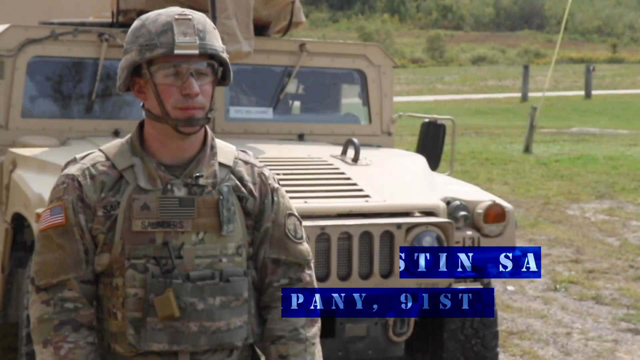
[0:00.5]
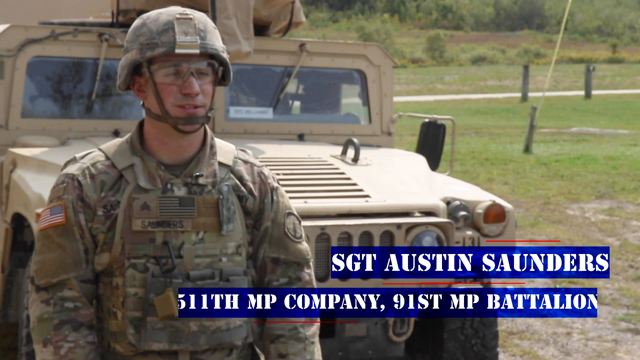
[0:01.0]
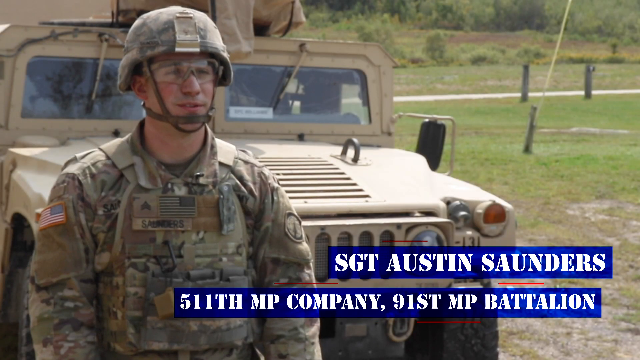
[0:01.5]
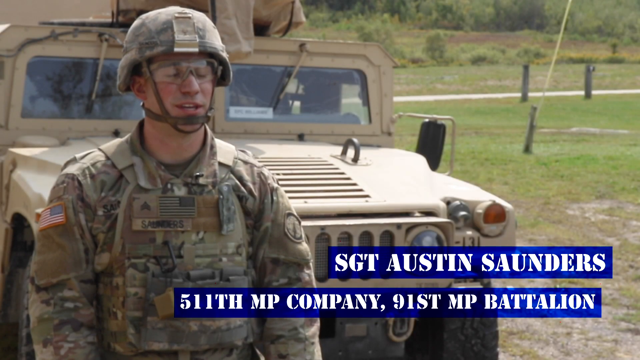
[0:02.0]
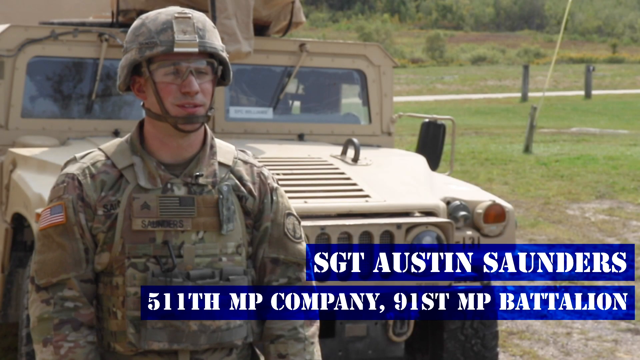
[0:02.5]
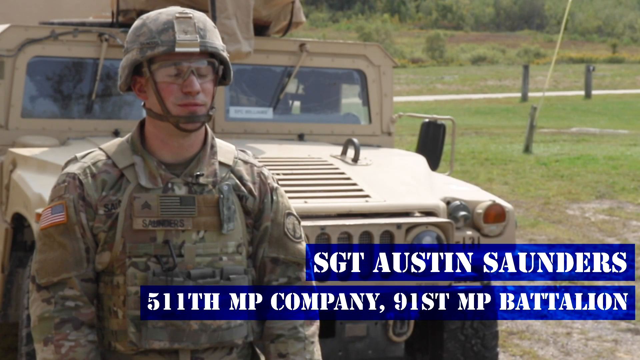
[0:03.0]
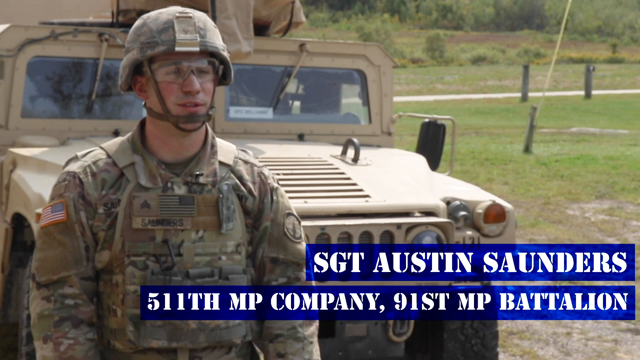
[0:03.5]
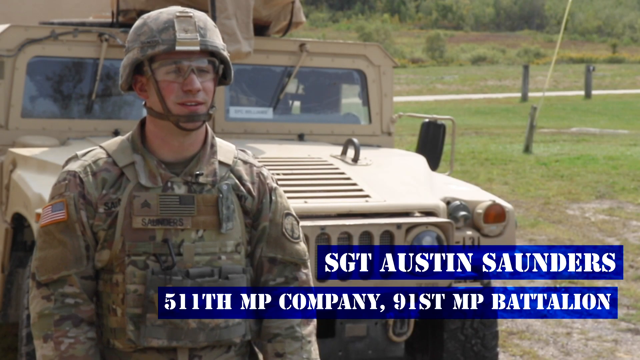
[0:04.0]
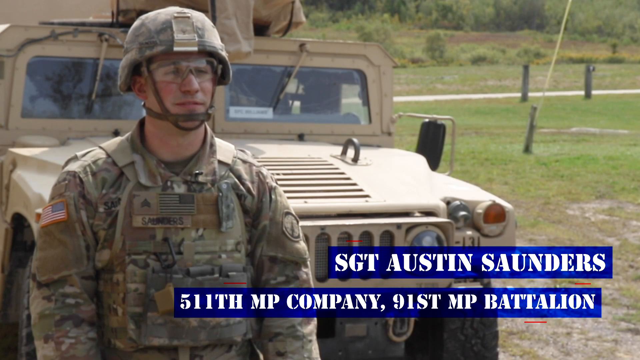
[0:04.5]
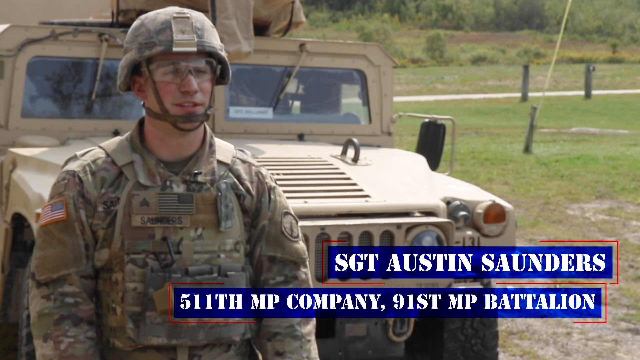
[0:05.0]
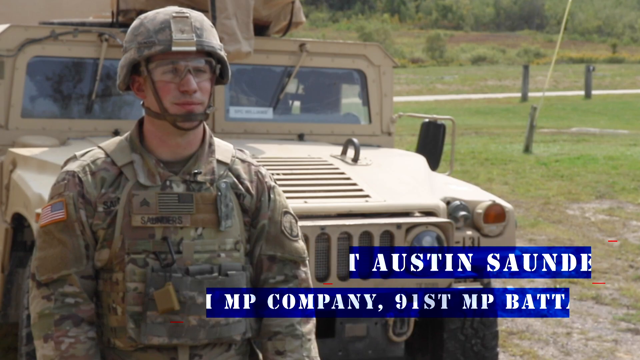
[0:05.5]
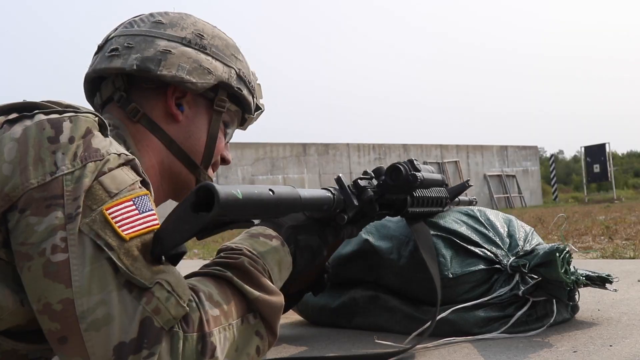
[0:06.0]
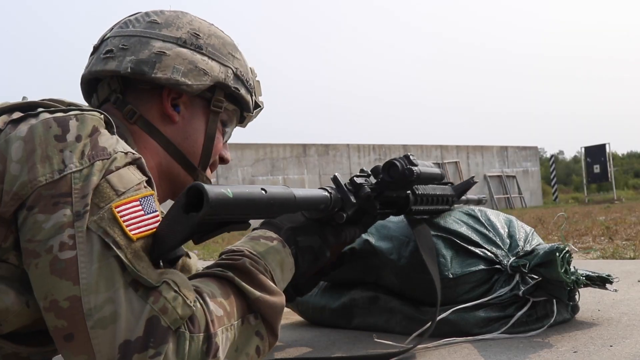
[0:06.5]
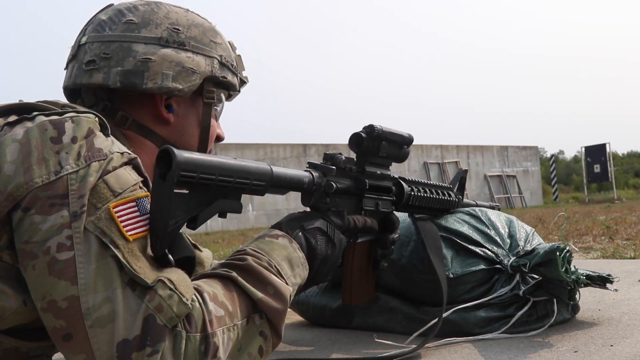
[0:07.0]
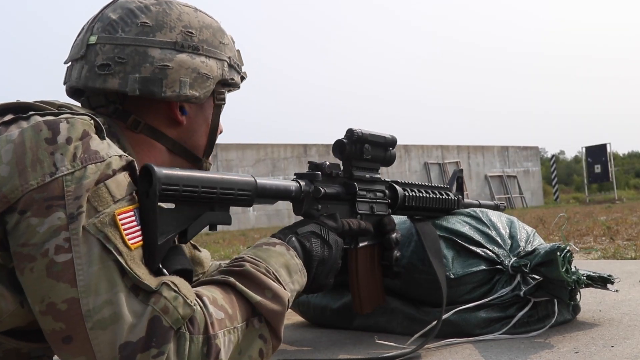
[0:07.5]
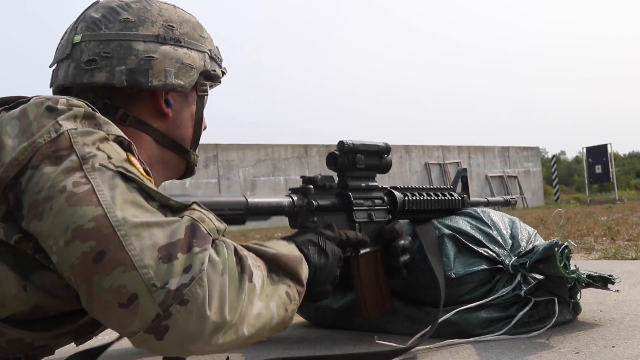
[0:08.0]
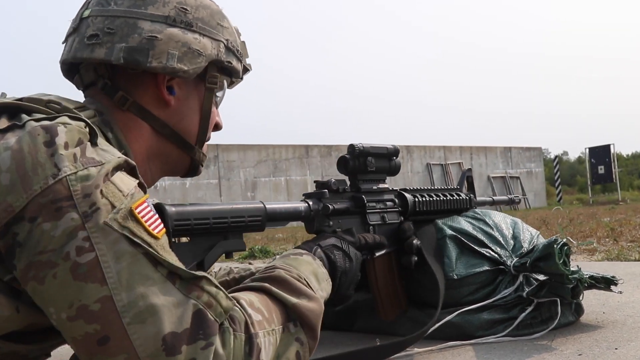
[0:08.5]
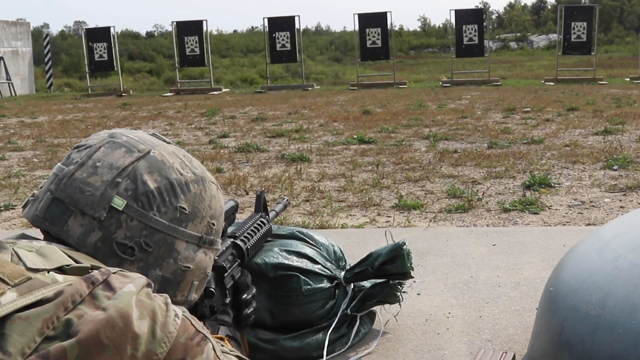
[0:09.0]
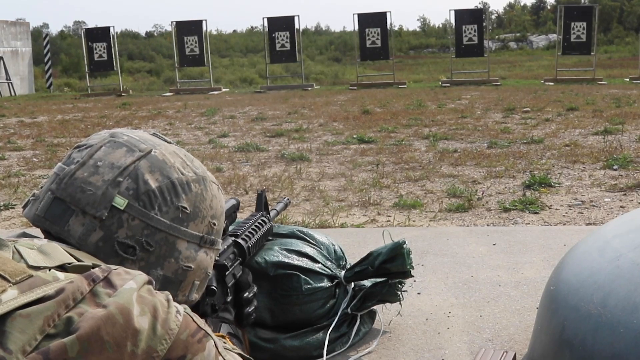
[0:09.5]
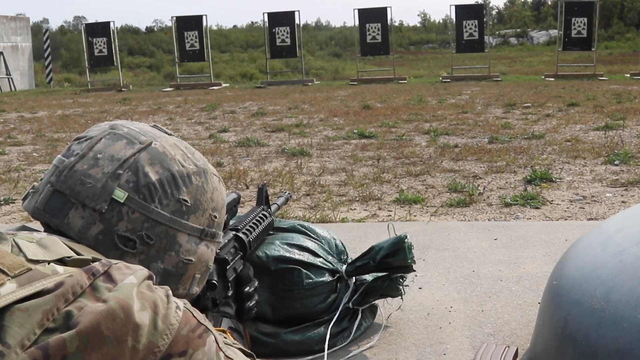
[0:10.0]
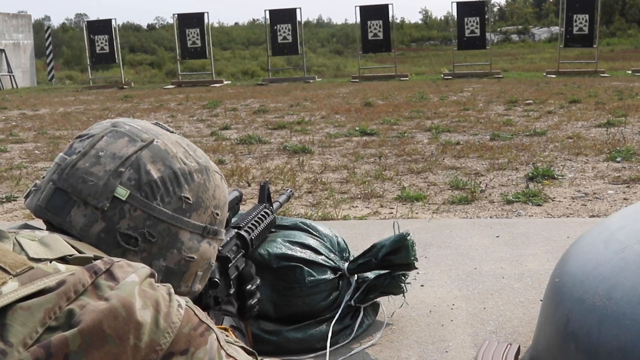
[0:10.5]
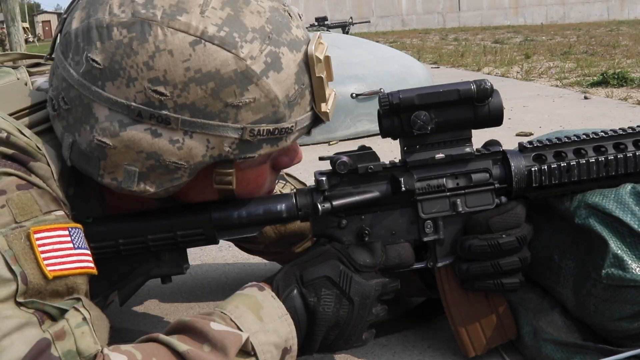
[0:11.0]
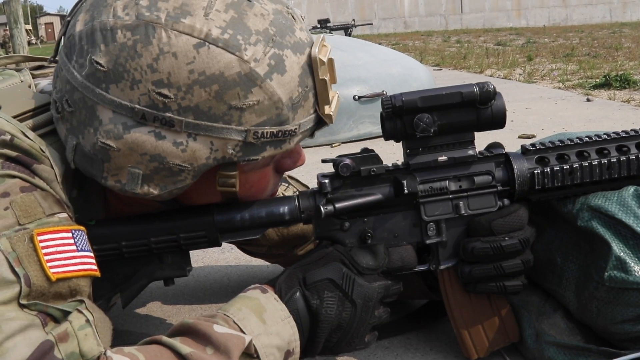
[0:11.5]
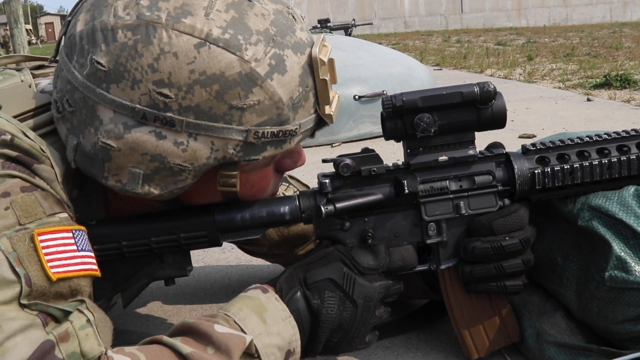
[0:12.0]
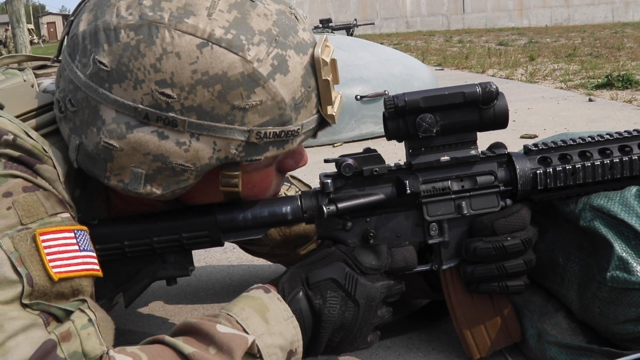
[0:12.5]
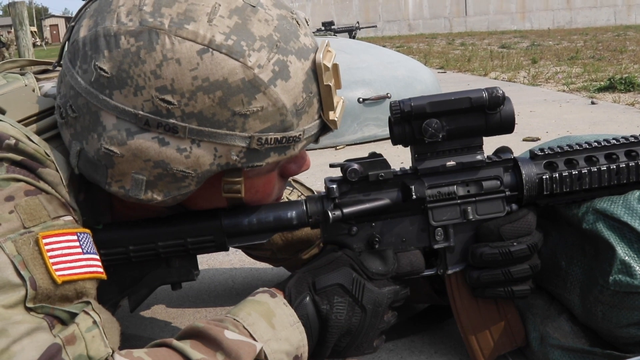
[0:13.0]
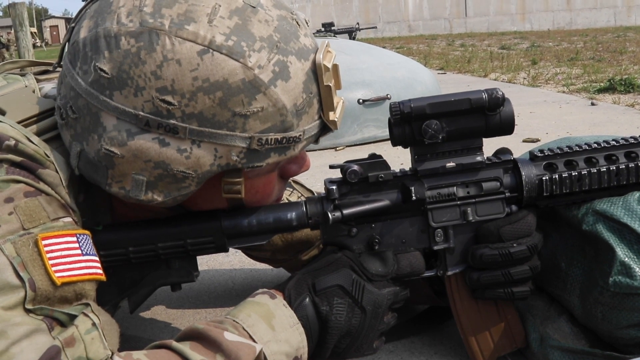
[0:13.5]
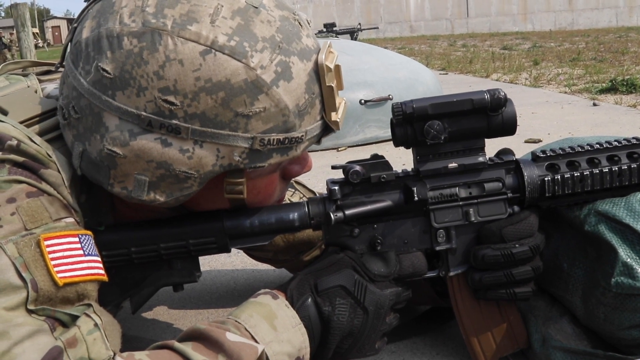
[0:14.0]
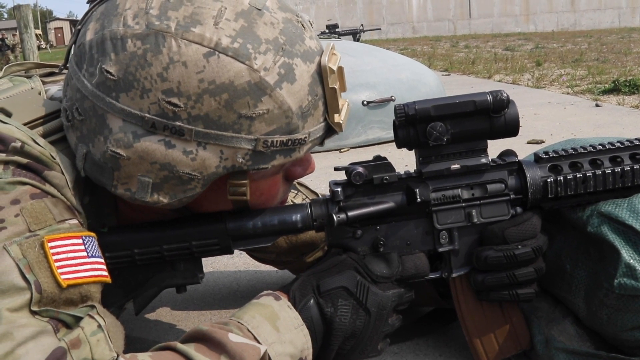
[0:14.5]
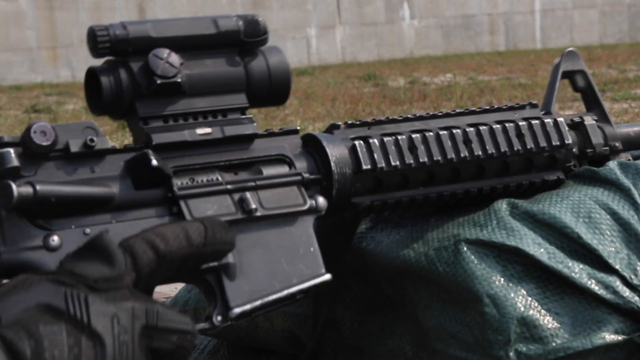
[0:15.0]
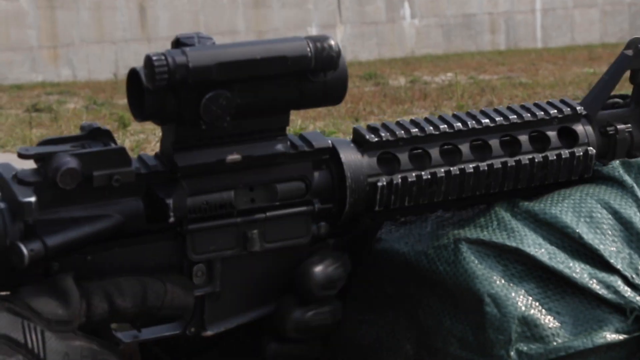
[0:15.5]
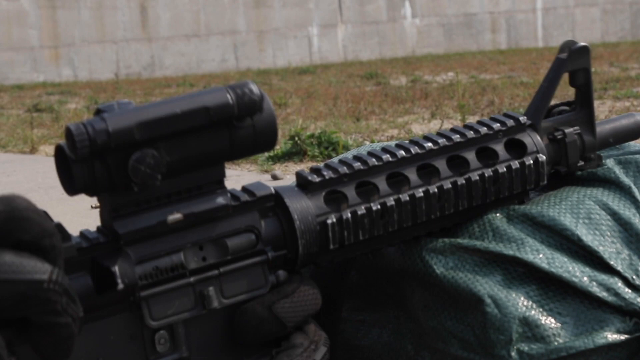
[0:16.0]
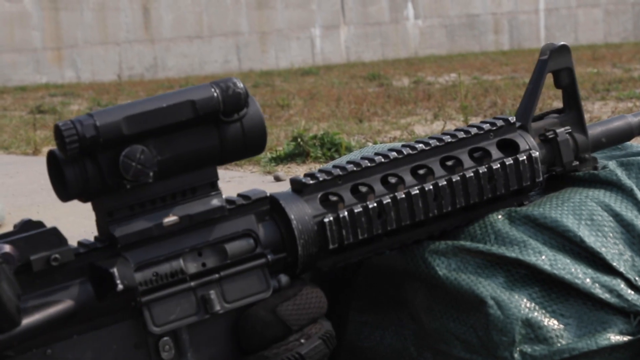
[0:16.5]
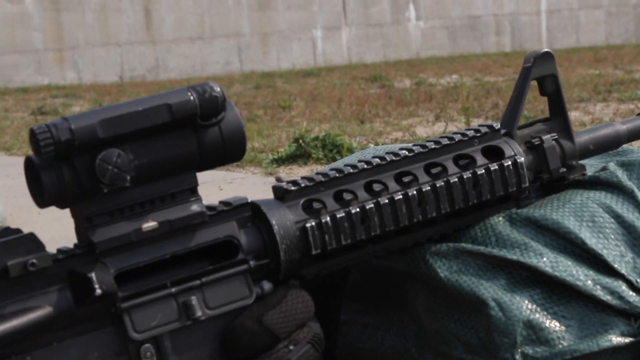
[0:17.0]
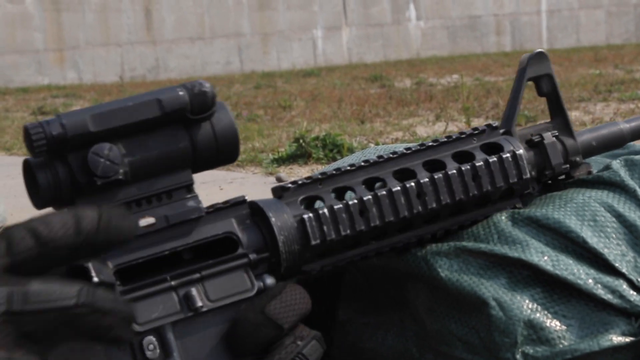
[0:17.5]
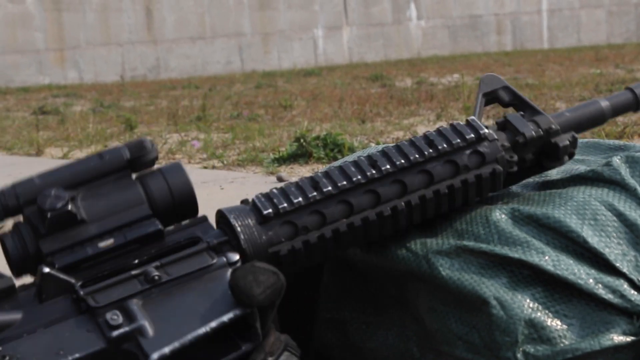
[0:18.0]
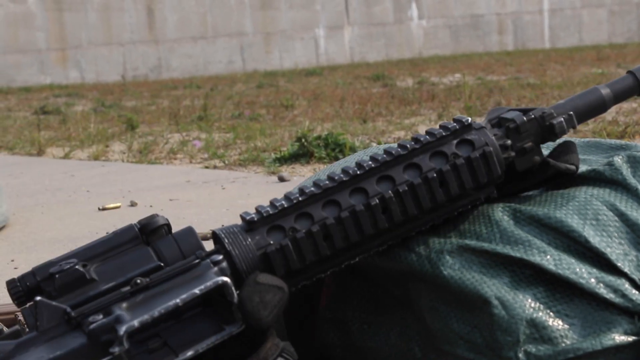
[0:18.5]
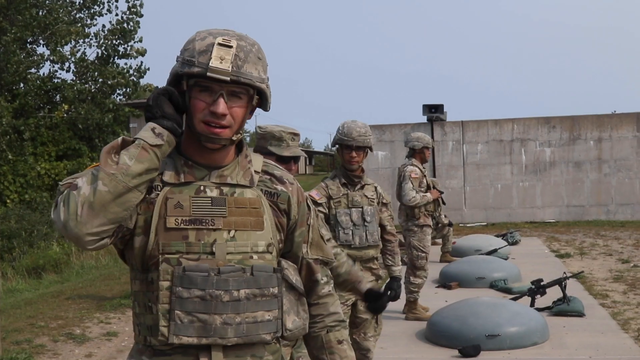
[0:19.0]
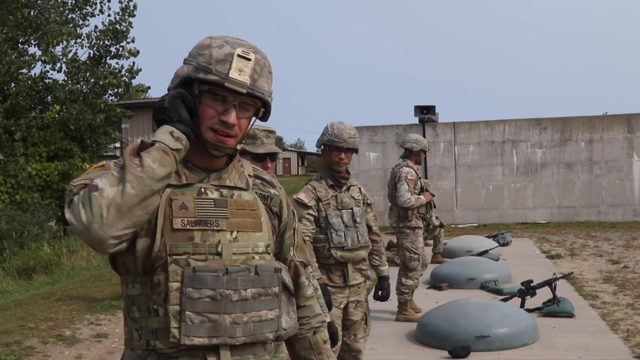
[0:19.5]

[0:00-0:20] The video opens on Austin Saunders, 91st MP battalion, a man in camouflaged fatigues with a helmet and clear glasses, with a tan Humvee behind him. He is then shown on his stomach with a sandbag, holding a loaded, locked weapon that has sights and is high-powered, apparently fully automatic. He is shooting at six targets side by side, probably about 50 yards away.